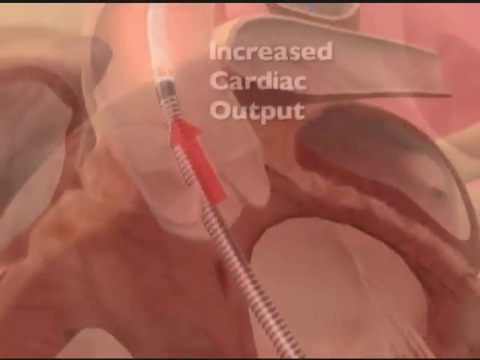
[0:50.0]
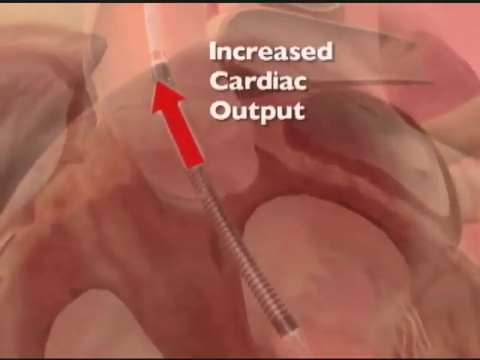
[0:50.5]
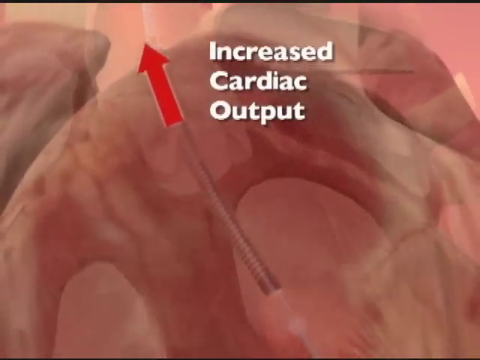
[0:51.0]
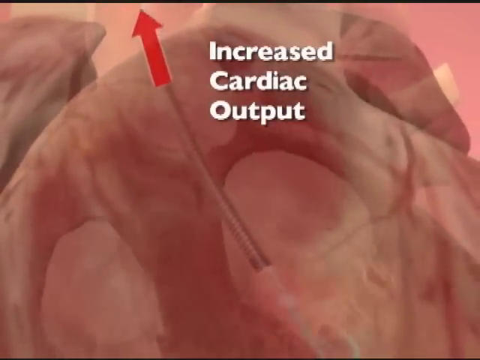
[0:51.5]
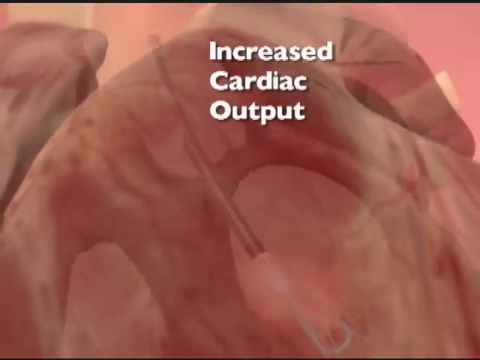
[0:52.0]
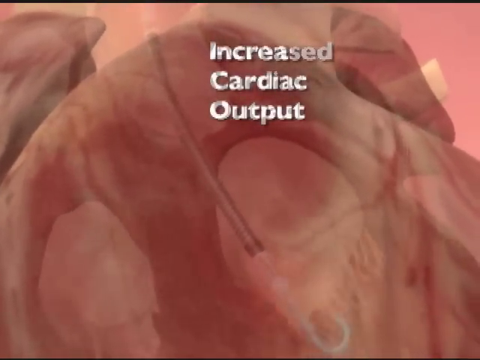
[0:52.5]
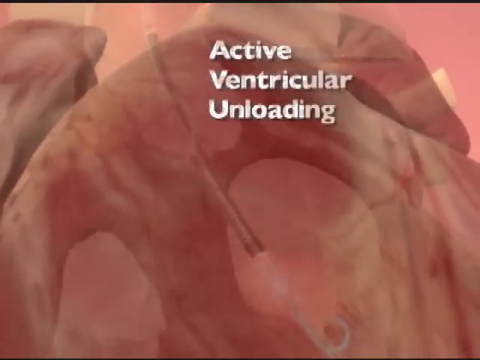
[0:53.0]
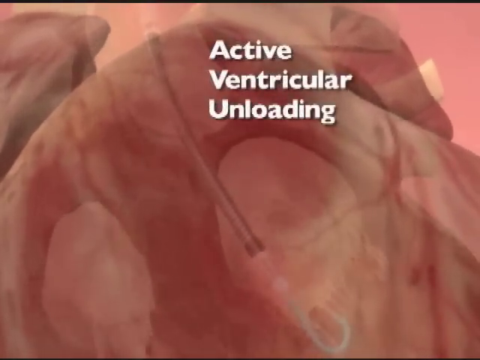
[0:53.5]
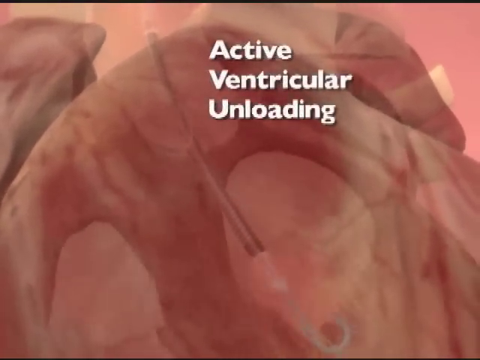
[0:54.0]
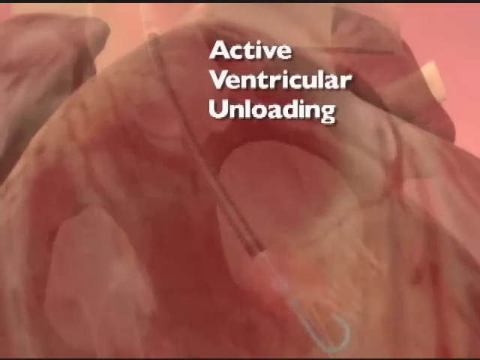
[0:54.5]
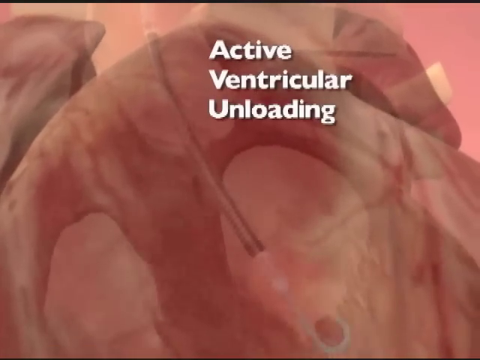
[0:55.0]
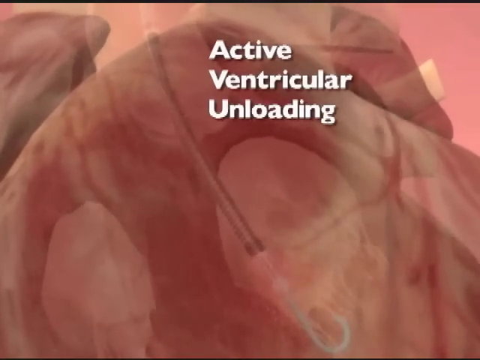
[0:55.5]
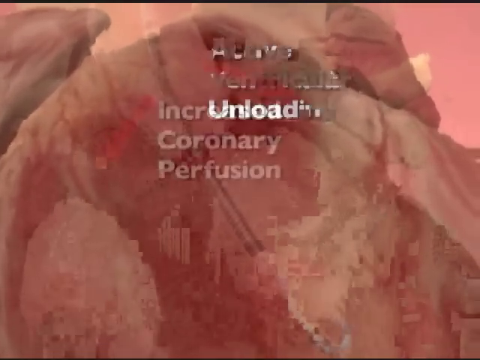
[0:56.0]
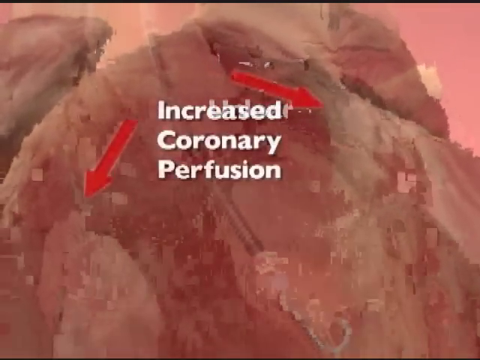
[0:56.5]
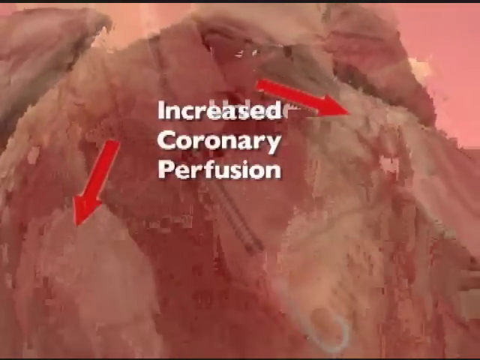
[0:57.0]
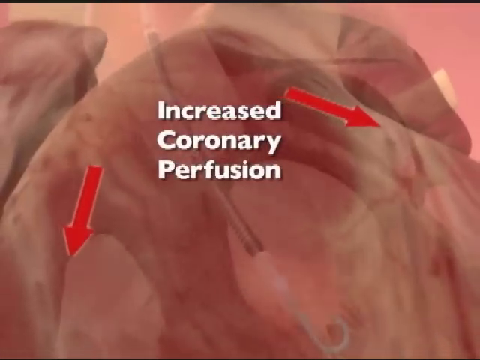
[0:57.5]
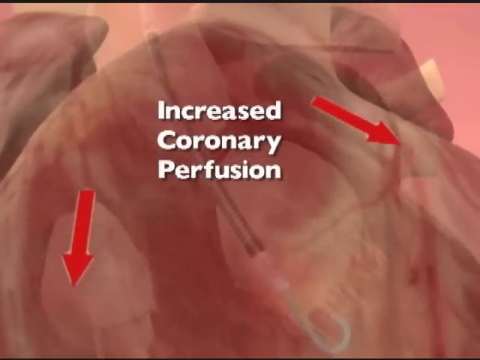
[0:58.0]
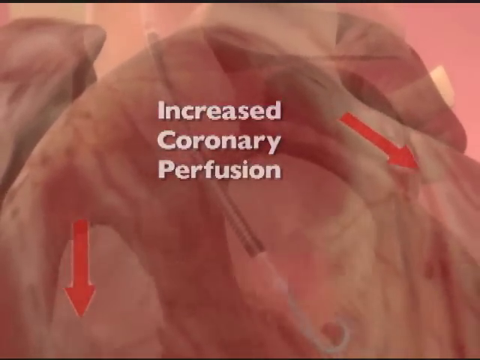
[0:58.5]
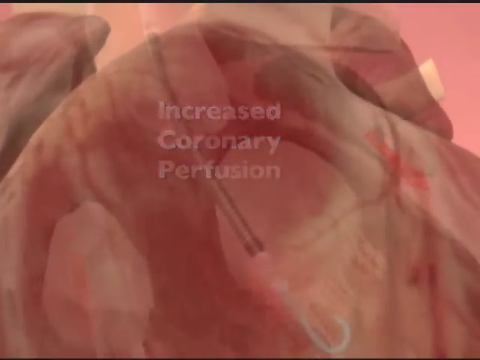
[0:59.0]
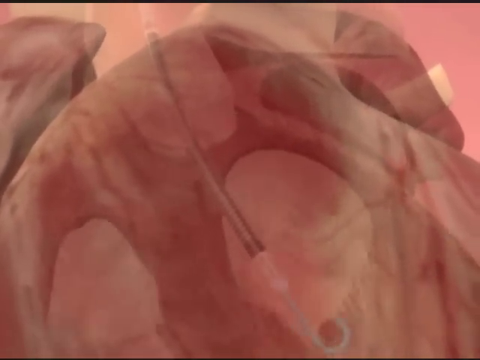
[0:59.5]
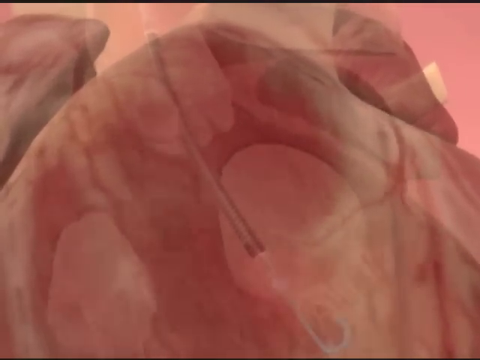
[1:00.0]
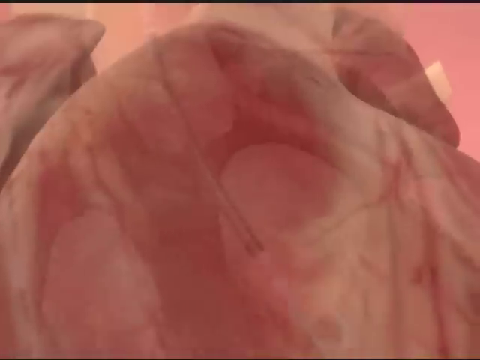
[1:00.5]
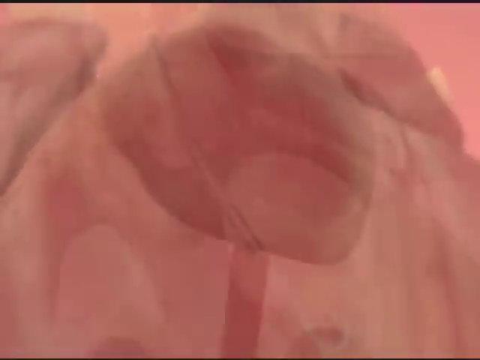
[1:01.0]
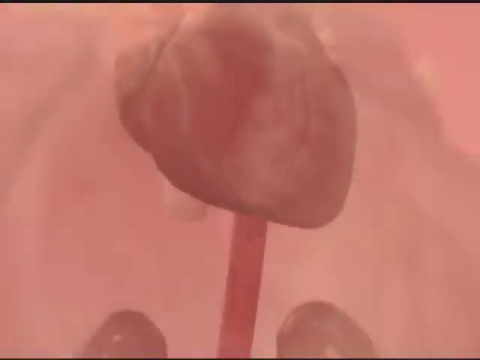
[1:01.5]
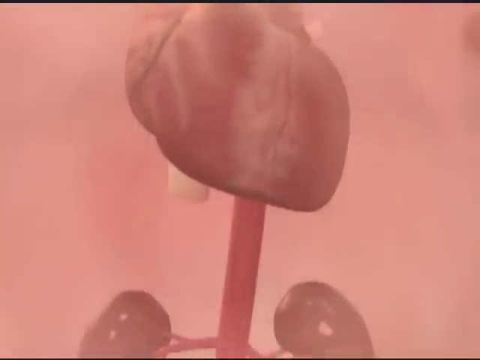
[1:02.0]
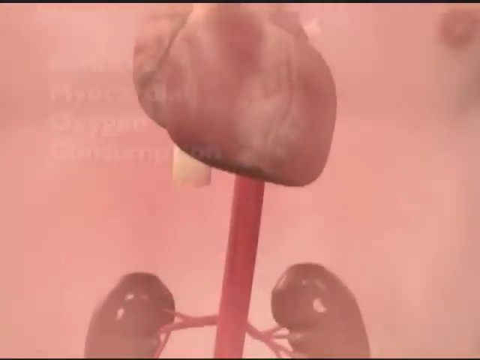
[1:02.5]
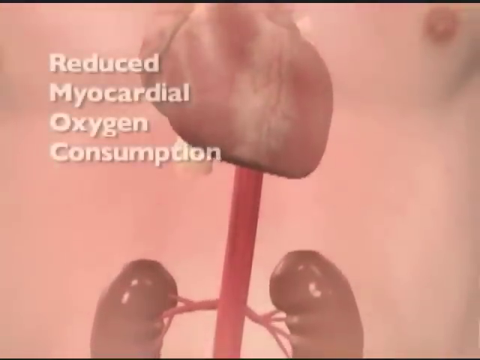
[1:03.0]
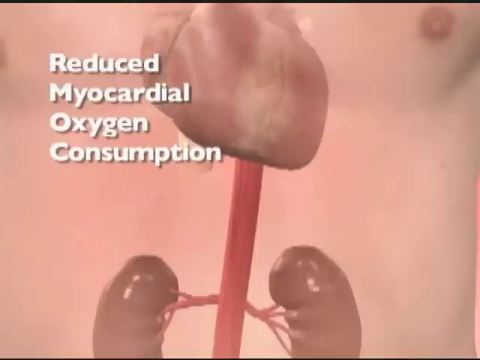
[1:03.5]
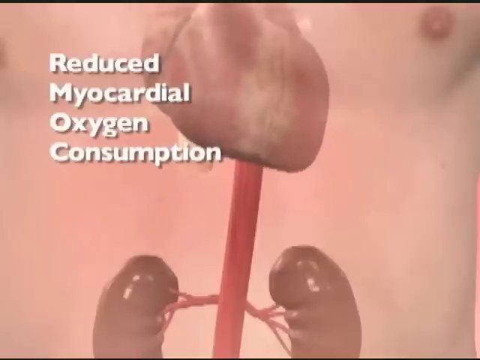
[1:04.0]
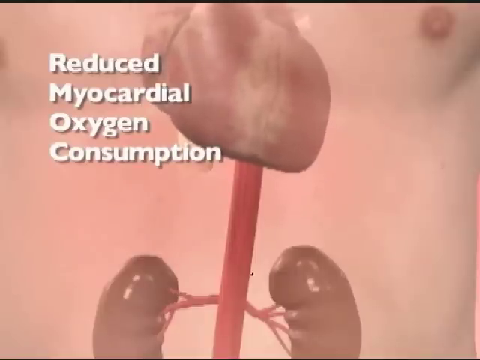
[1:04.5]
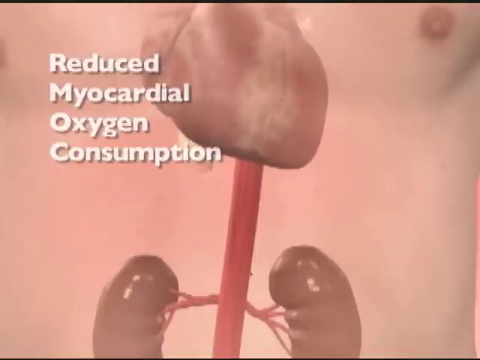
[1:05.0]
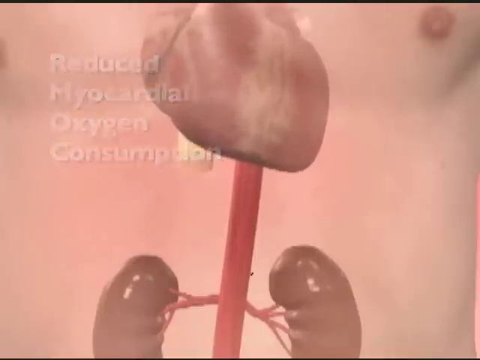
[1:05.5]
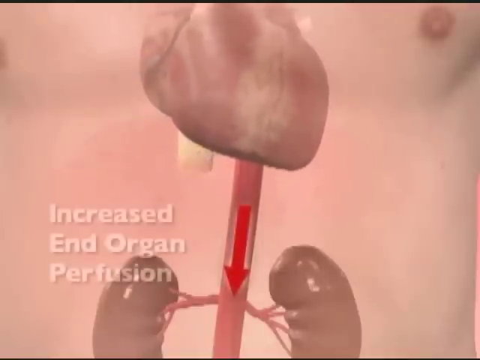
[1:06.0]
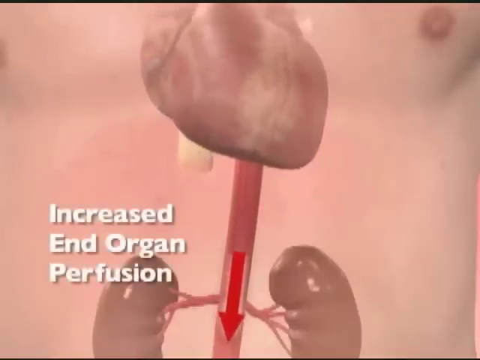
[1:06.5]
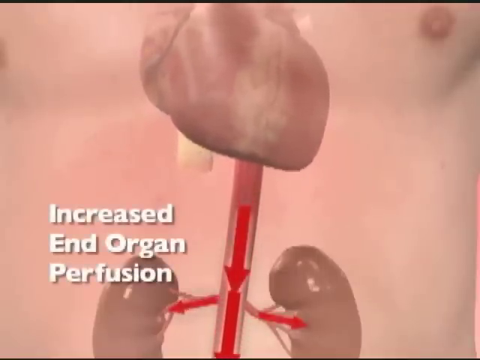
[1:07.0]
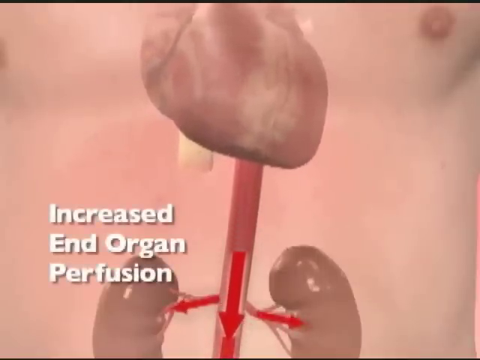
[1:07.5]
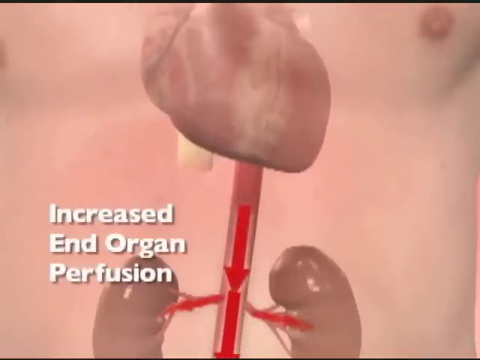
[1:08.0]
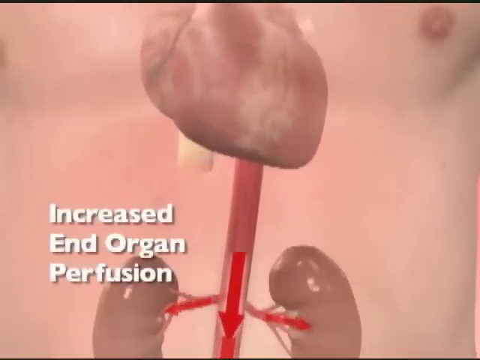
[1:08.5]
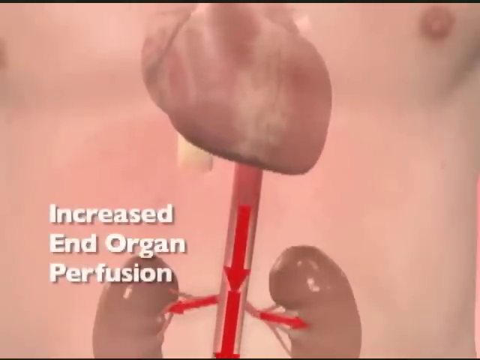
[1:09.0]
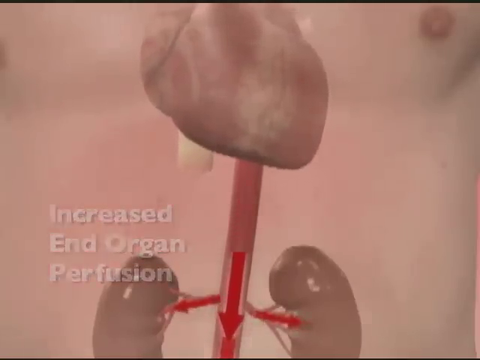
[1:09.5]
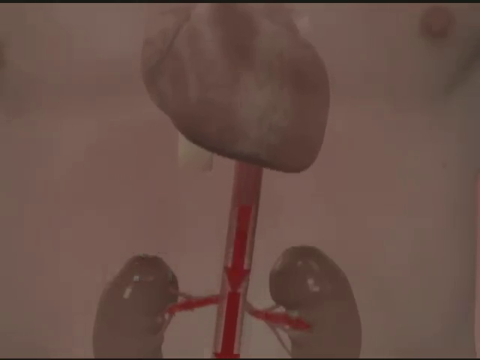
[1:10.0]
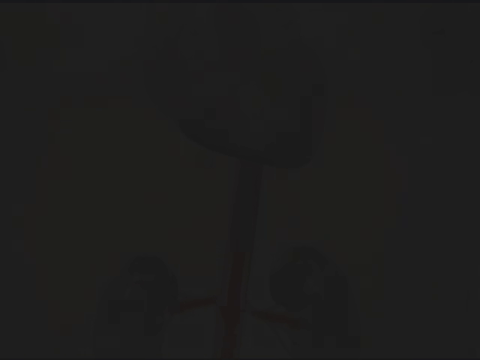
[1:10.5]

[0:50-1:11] Text pops up around the outlet area reading "increased cardiac output." A red arrow goes from inside the formerly black tube section toward its exit, the outlet area, then travels up the tube, leaving the black section, out into the outlet area and beyond. Meanwhile, the outline of the heart chamber is visible around it. More text appears reading "active ventricular unloading," which is then replaced by text reading "increased coronary perfusion." From the tube's main section, two red diagonal arrows move out to the left and right, leaving the tube area and going down around the outsides of the heart chambers. A zoomed-out view of the heart shows it pumping, and text reads "reduced myocardial oxygen consumption." A red arrow then goes down the part of the tube connecting to the heart at the bottom, and as it goes down, text reads "increased end organ perfusion."